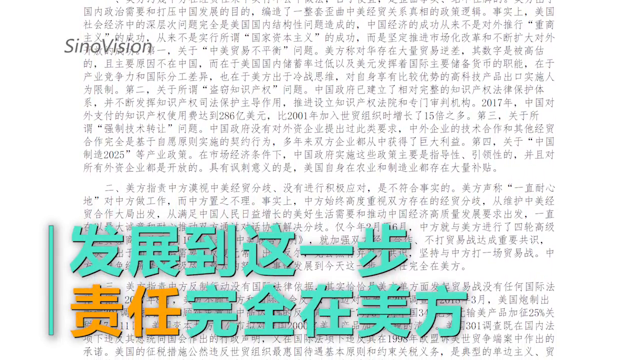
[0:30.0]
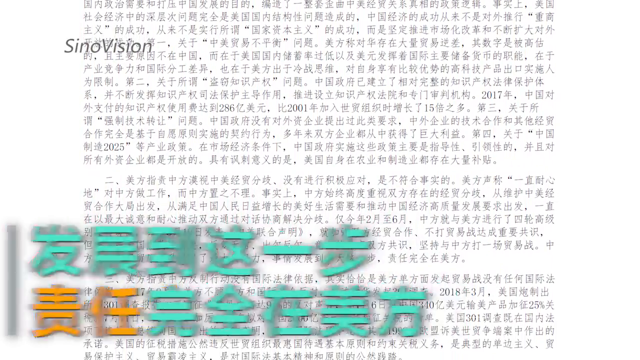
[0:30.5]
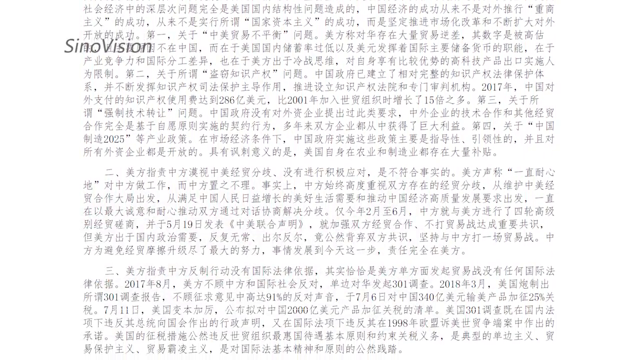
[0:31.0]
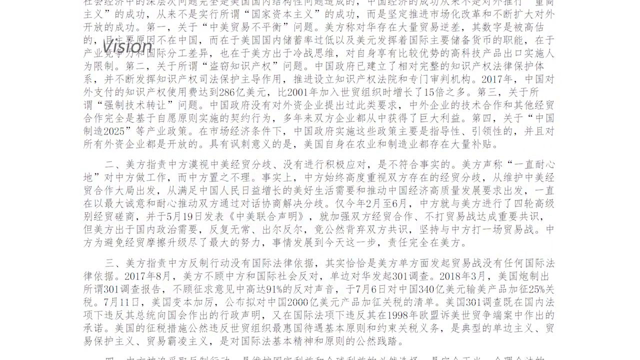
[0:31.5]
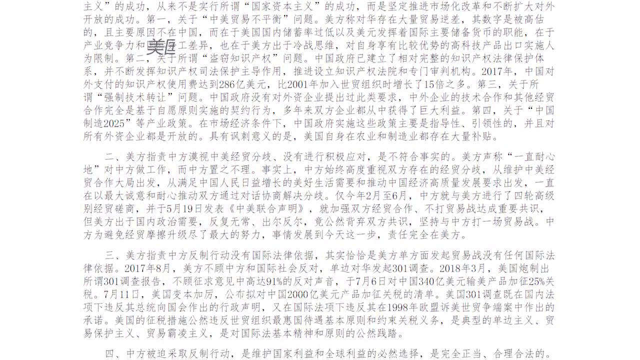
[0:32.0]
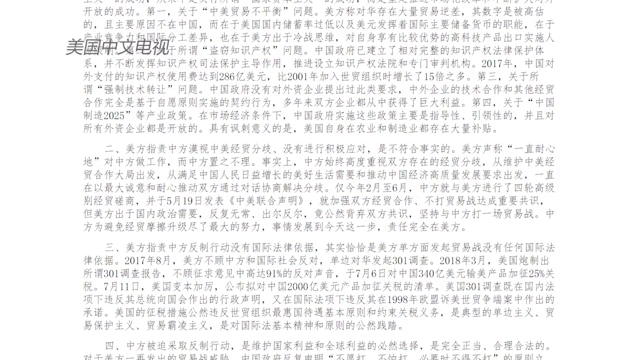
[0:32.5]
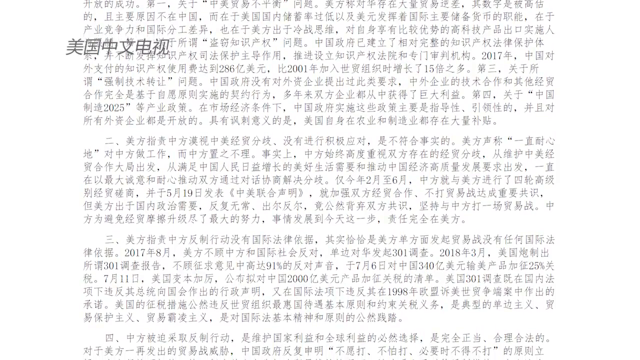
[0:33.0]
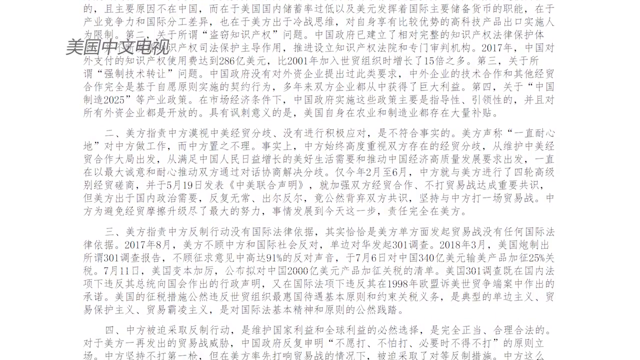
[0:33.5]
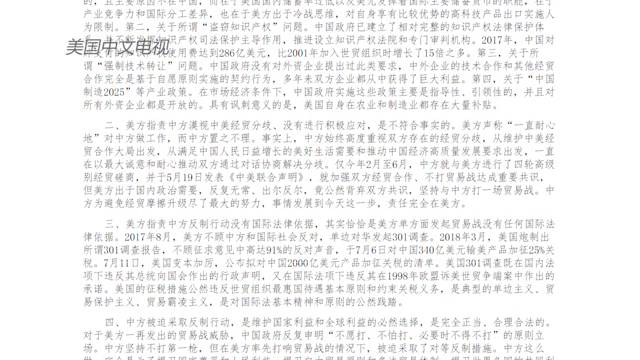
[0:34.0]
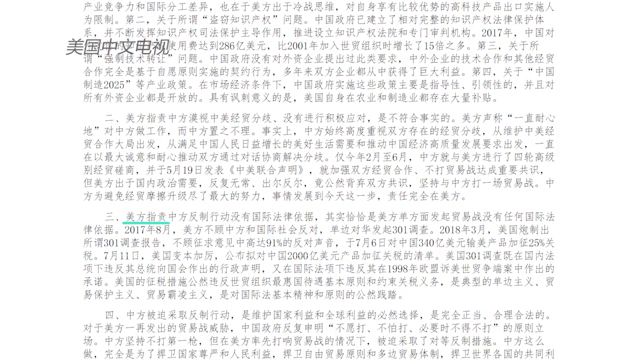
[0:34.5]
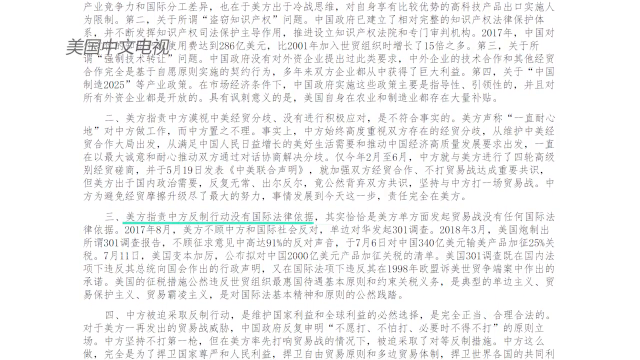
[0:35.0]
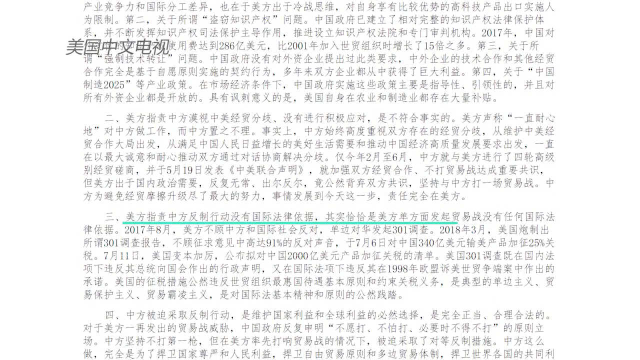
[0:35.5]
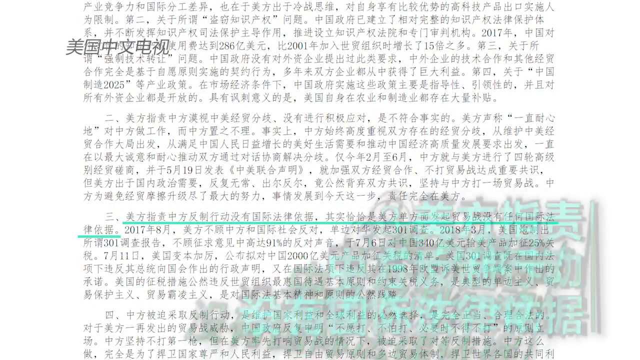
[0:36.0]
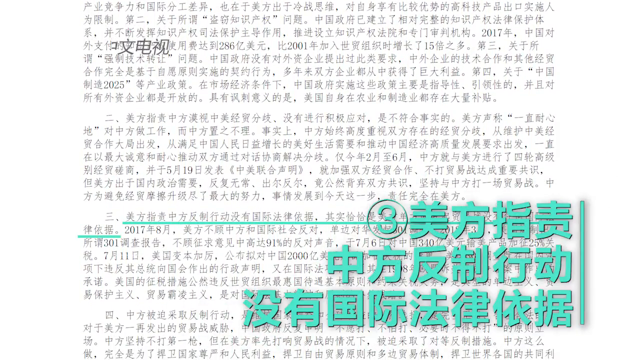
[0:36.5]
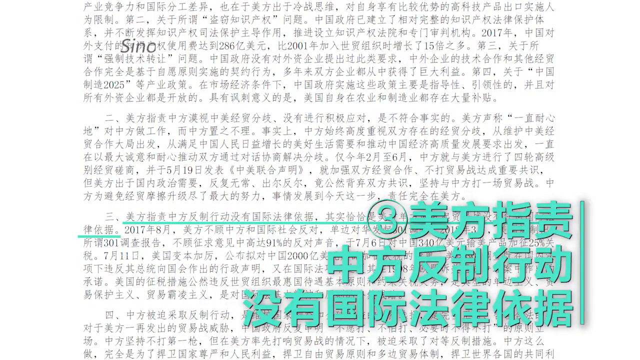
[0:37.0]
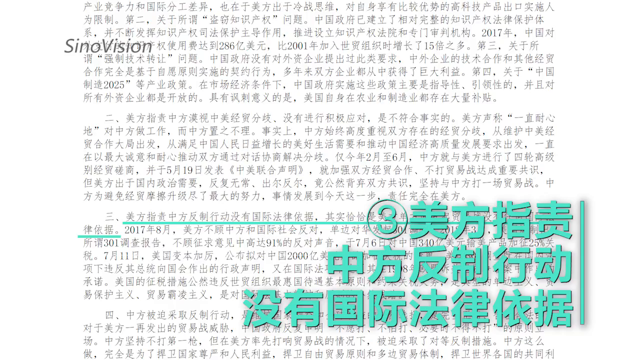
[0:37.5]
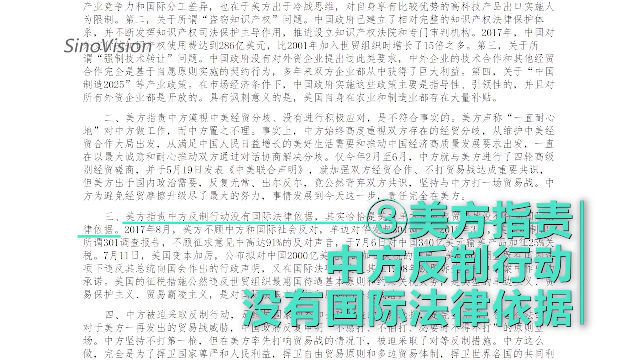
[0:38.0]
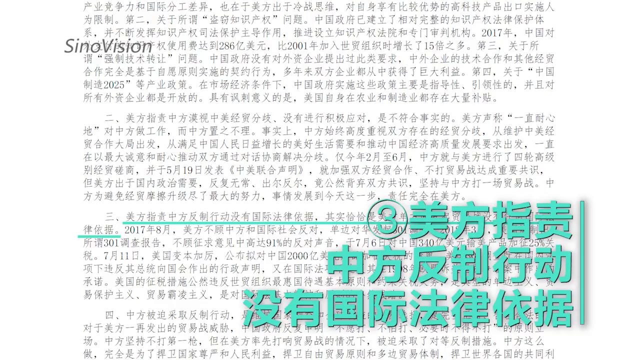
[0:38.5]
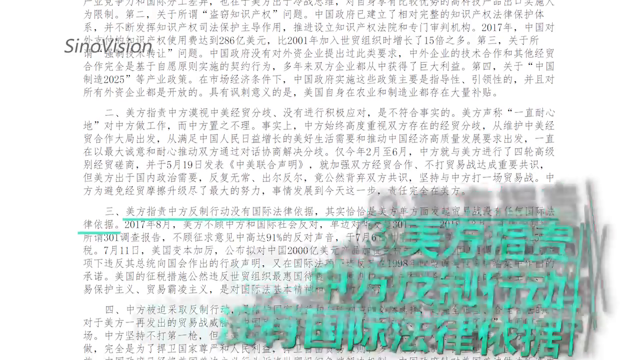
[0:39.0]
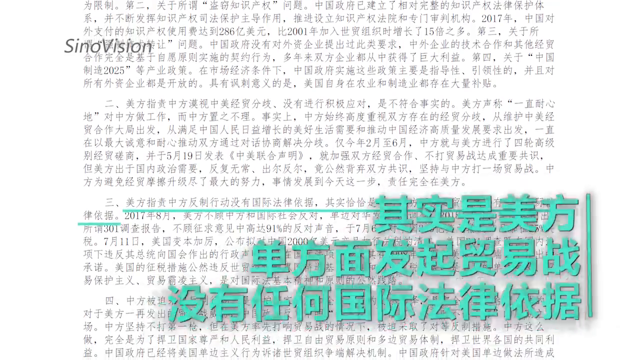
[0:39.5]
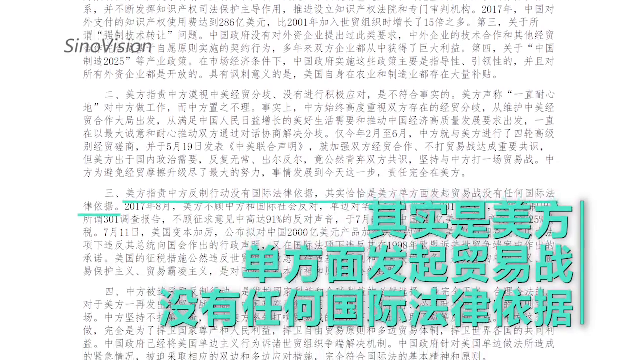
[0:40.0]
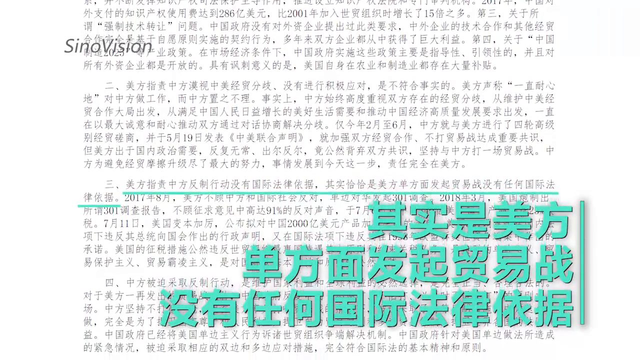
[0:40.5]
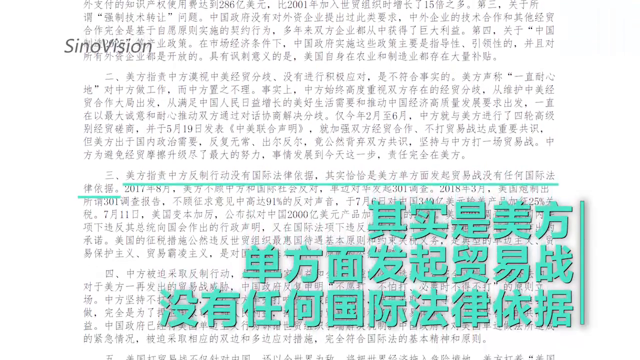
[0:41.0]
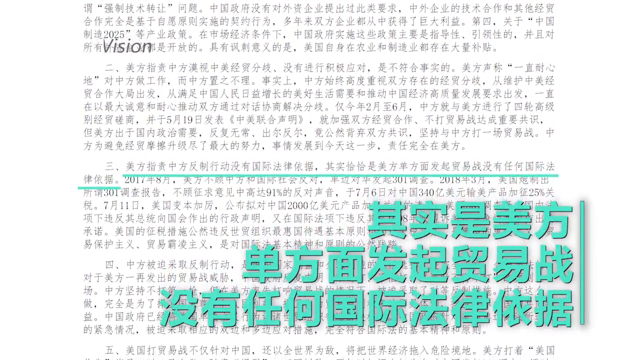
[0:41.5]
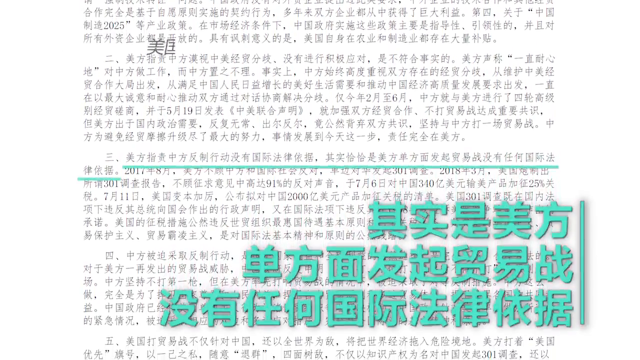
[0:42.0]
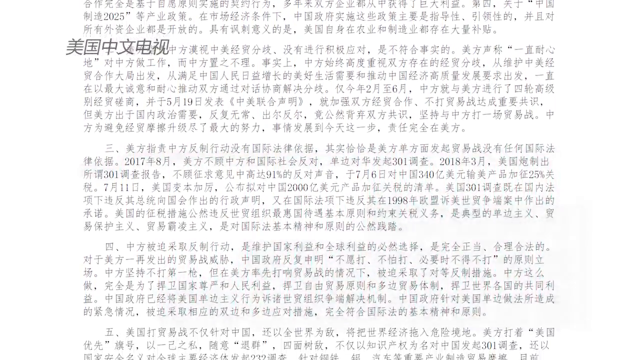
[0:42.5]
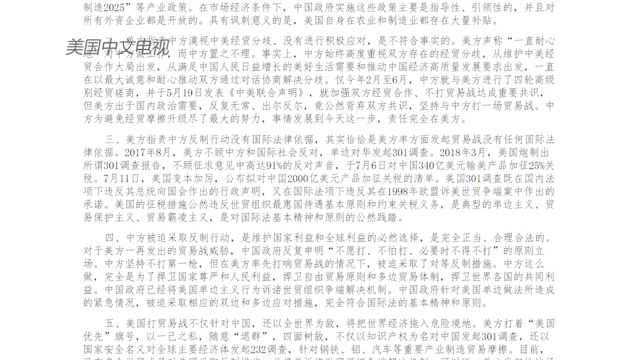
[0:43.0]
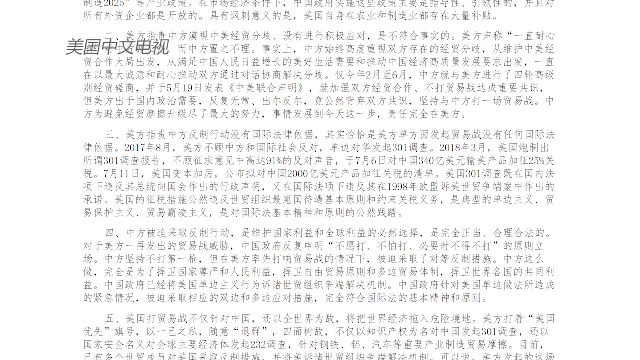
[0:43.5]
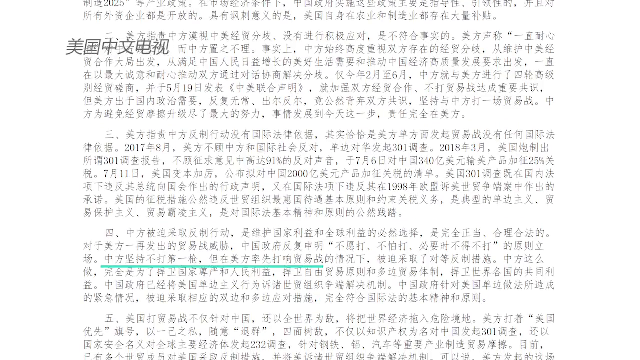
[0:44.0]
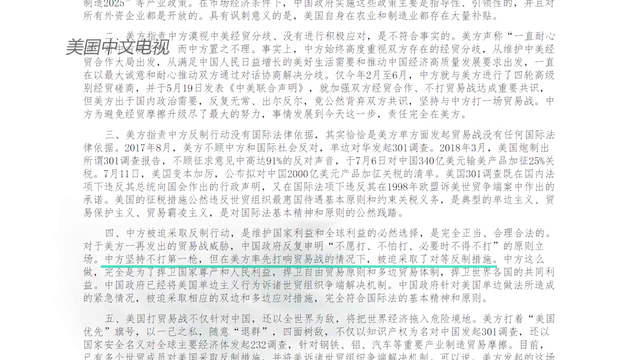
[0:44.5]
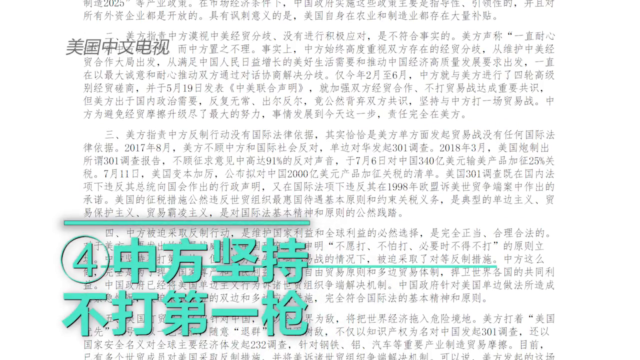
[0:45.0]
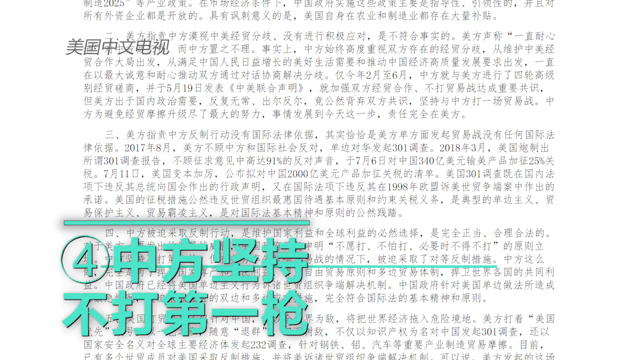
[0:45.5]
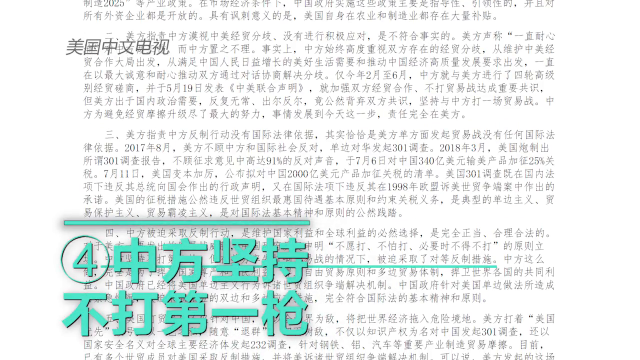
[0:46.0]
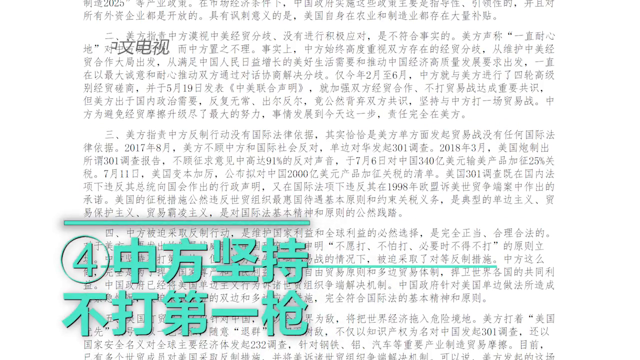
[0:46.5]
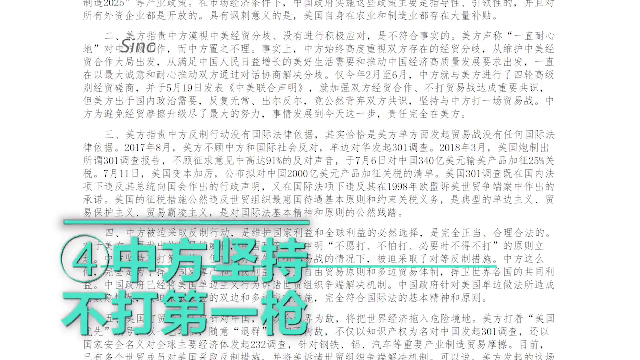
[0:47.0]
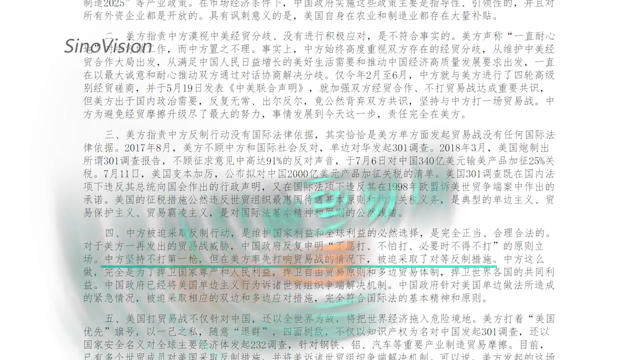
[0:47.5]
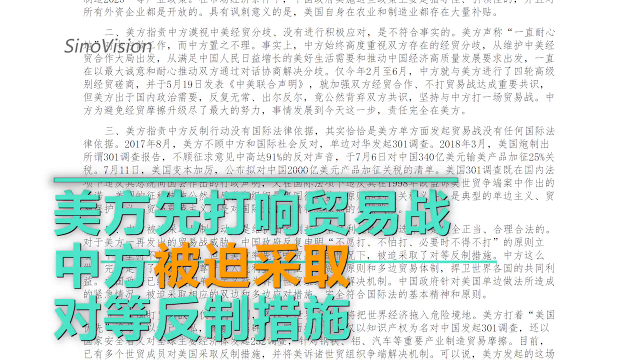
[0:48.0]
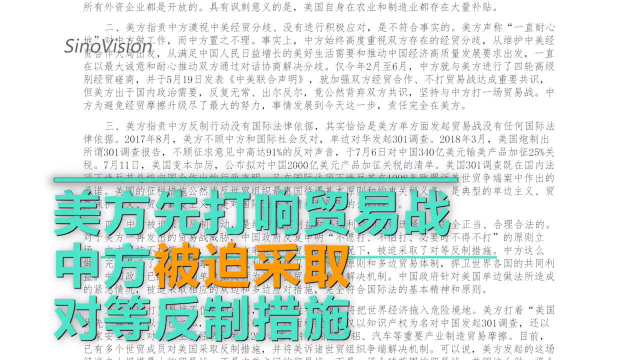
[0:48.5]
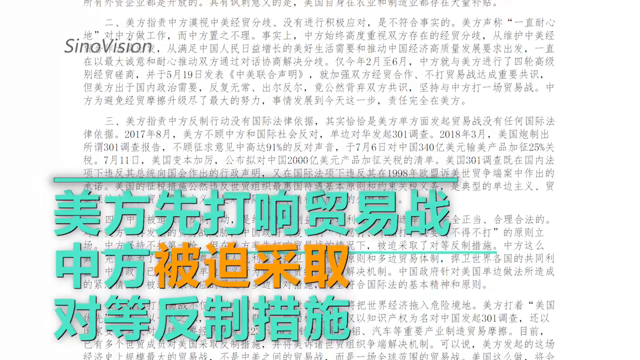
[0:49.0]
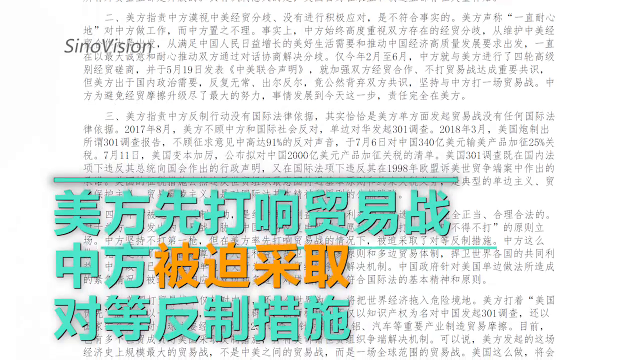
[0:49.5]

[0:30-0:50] A computer screen shows paragraphs of Chinese writing. An area is underlined in teal and then focused in on and brought up, with the number four beside it. The print at the bottom is enlarged, showing Chinese writing in teal with a couple of characters in orange. Up at the top, an area is bolded every so often and reads "CINOVISION." The paragraphs keep moving up the screen as more text fills in at the bottom. Almost no English words are visible, but some numbers appear, including the years 2017 and 2001.